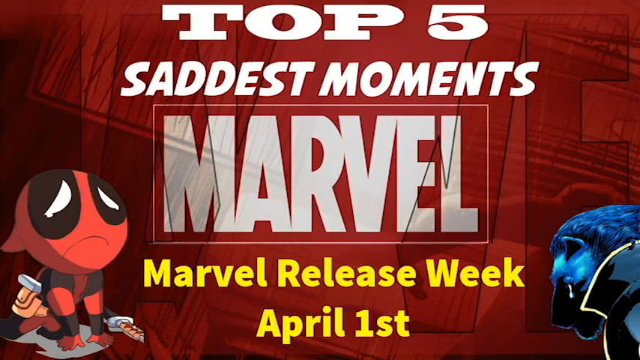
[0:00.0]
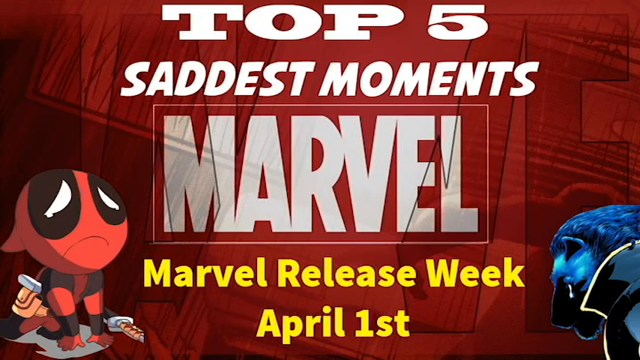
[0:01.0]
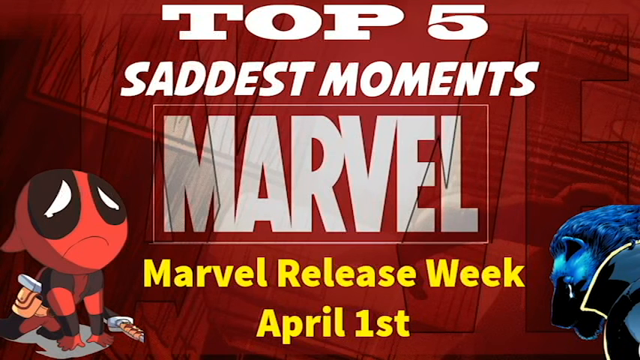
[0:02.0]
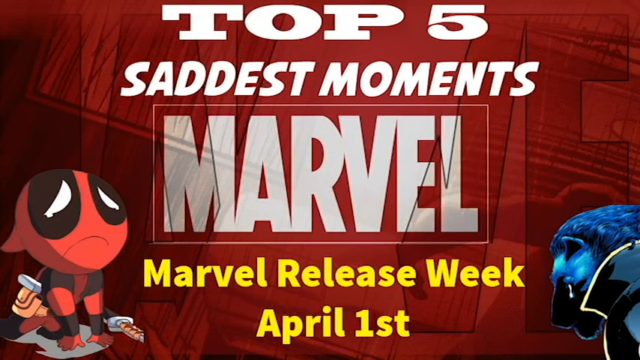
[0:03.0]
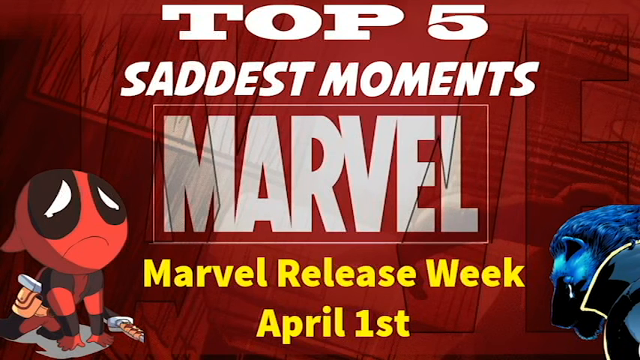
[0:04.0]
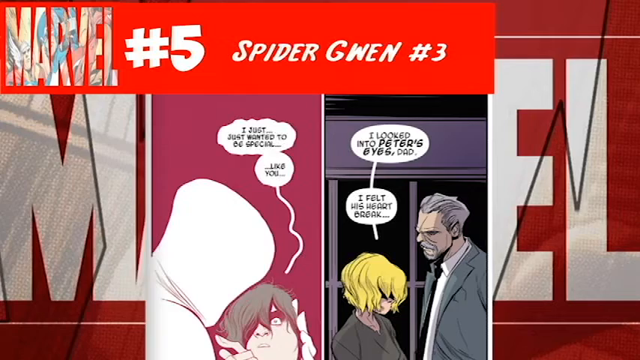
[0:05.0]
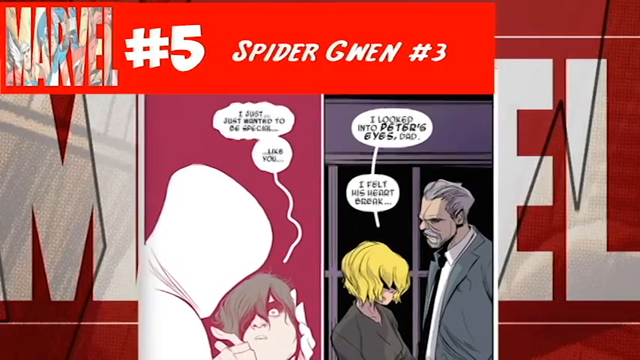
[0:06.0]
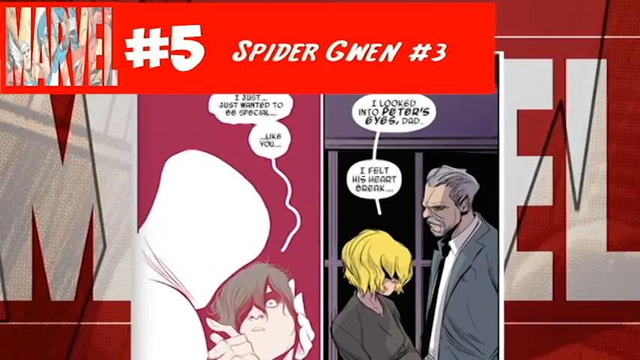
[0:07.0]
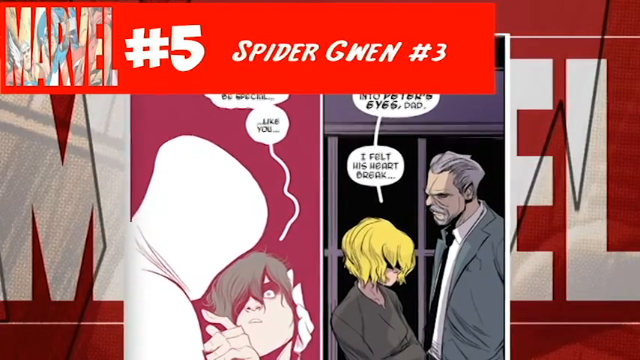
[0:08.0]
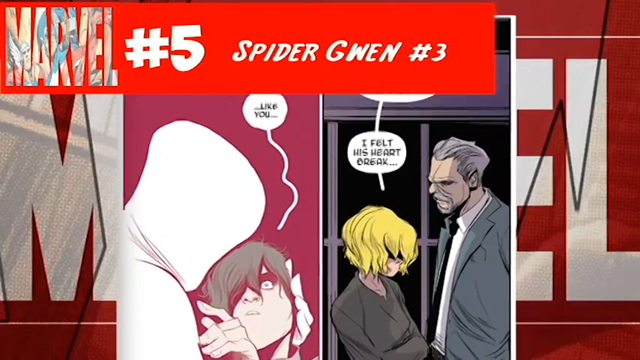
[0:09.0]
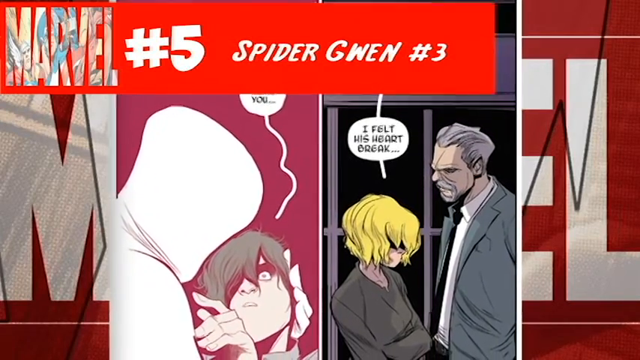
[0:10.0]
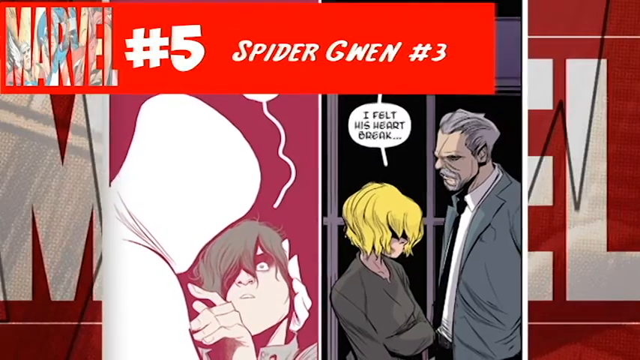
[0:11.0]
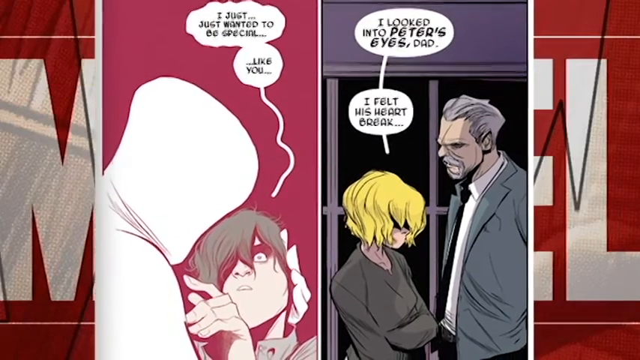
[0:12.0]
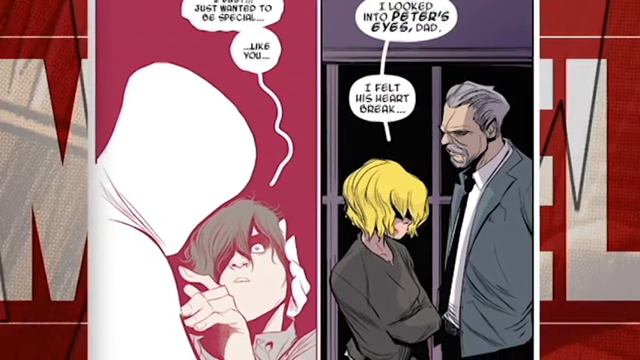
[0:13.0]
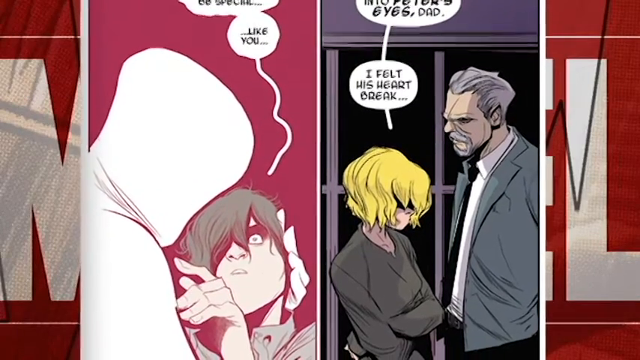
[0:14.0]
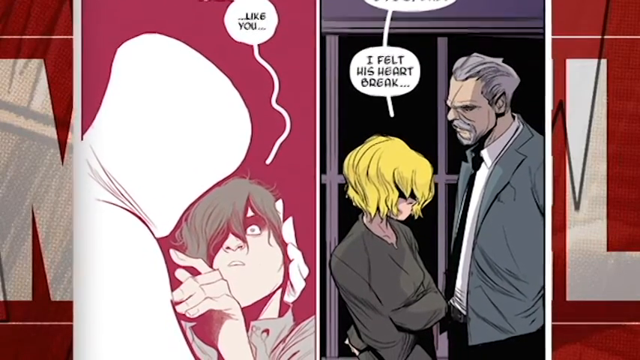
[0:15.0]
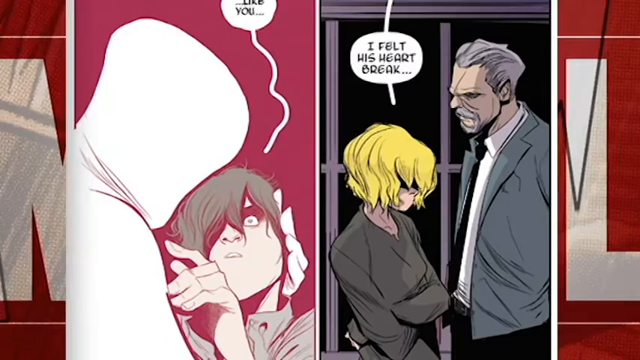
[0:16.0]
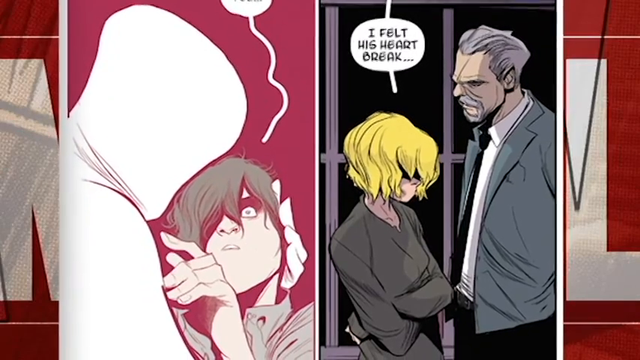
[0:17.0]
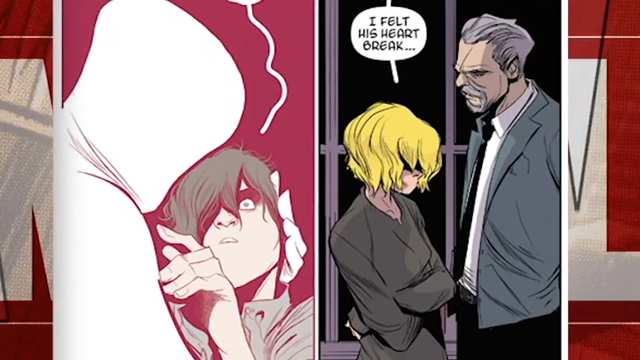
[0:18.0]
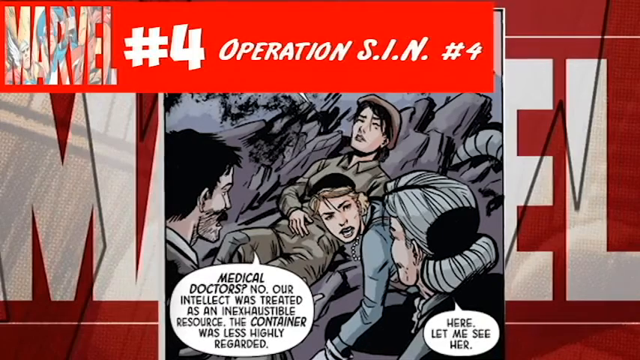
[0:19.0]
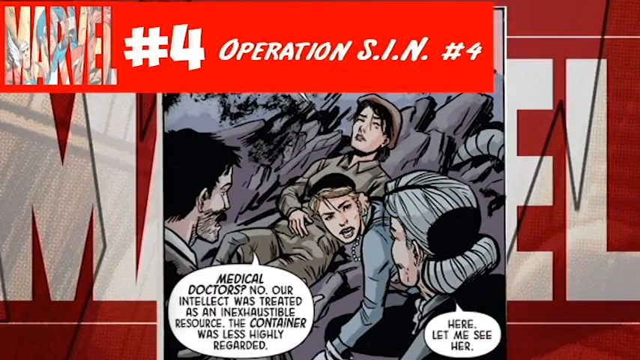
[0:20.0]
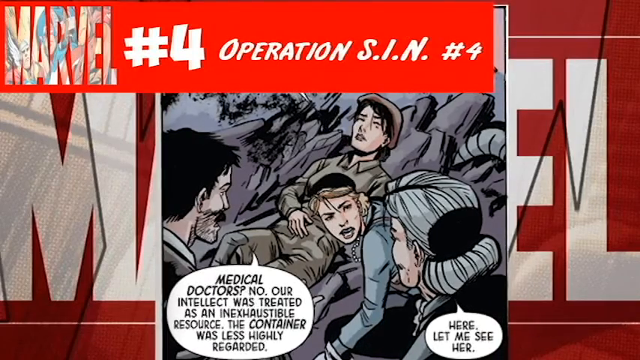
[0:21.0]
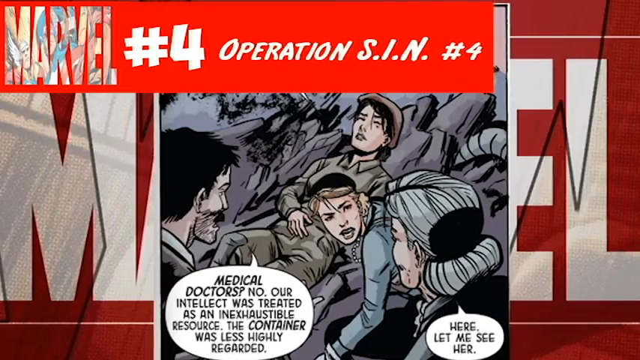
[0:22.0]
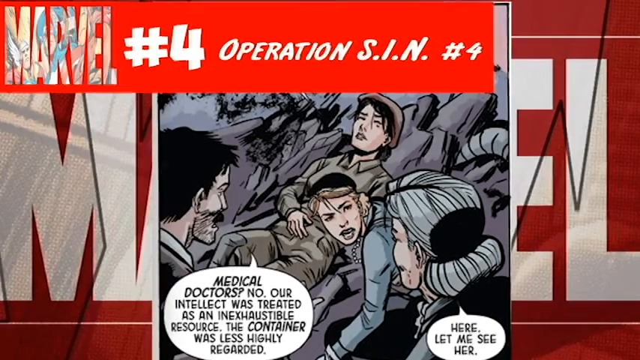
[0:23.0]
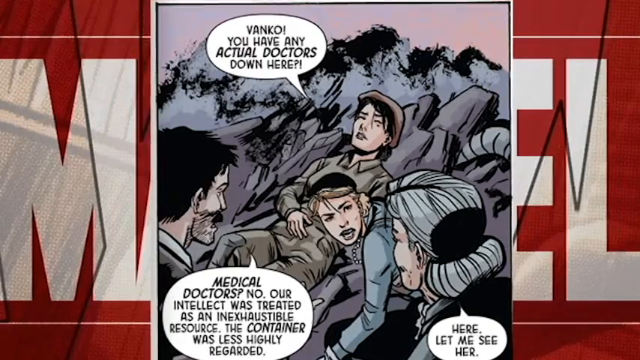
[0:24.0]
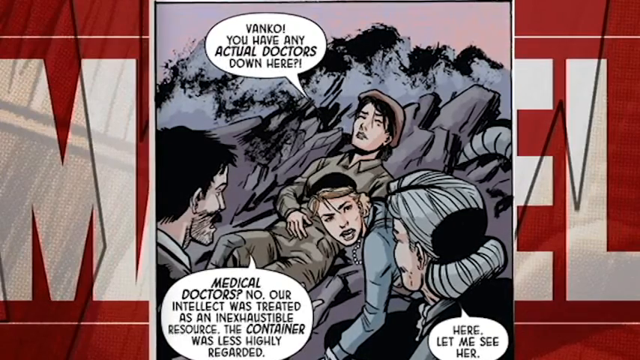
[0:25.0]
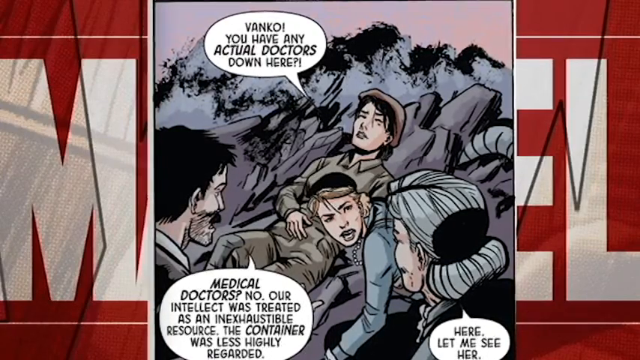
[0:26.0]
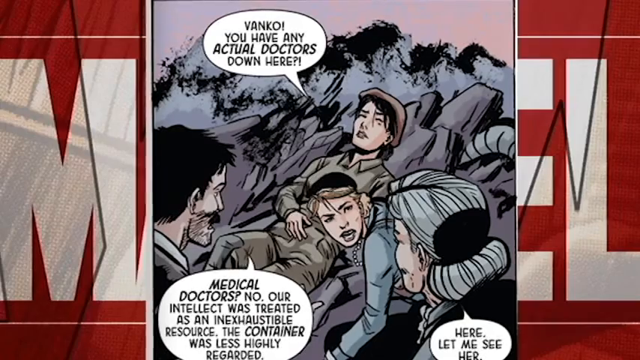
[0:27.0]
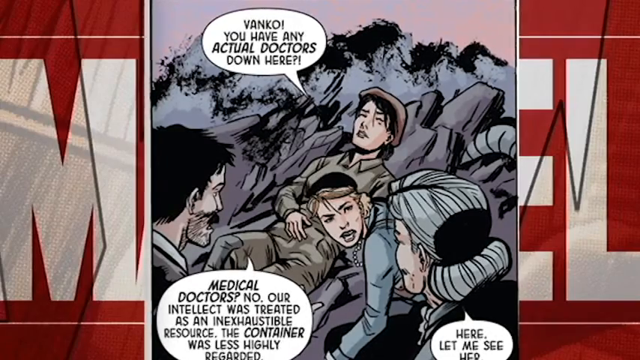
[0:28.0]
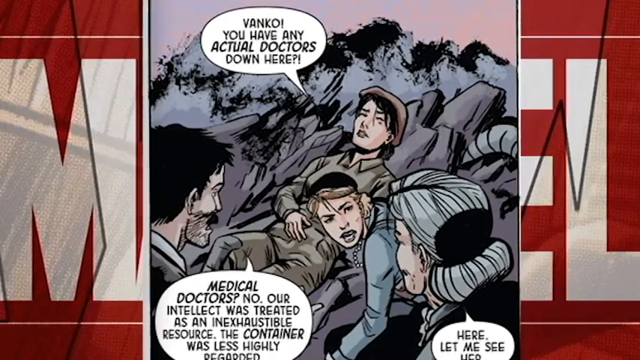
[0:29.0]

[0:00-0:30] The video opens with a comic-style thumbnail reading "Top 5 Saddest Moments Marvel." On the left side is what looks like a baby Daredevil, and on the right side is a blue individual. The video blends into a scene where, in the horizontal view, Marvel is visible in the background, and in the portrait area there are comic book panels whose text cannot really be read. Layered above this is a large red banner that reads "Marvel No. 5, Spider-Gwen No. 3." The comic shows at least four people across two panels side by side. The first panel has a red background and a very monochromatic white and off-white depiction of two people, one in a hood holding the head of the other. The right panel shows a woman with short blonde hair and, right beside her, a man with grey hair and a grey beard; they are standing in a room, and through the window it is dark outside. The video zooms in so that the portrait area takes up more of the screen as time goes by. It then switches to another comic book panel, "Marvel No. 4, Operation S.I.N. No. 4."